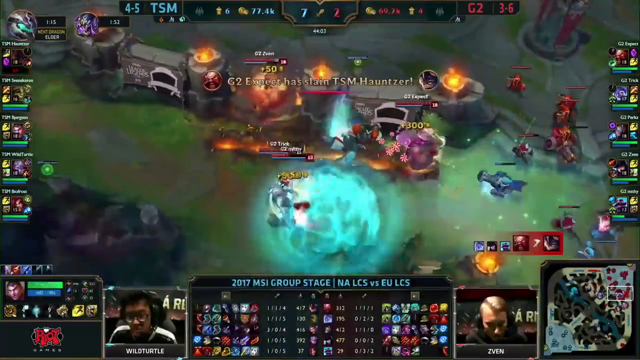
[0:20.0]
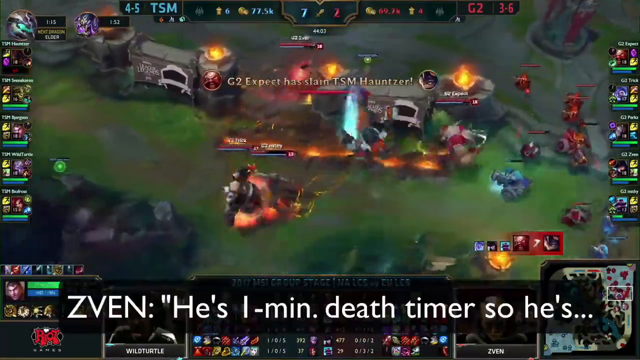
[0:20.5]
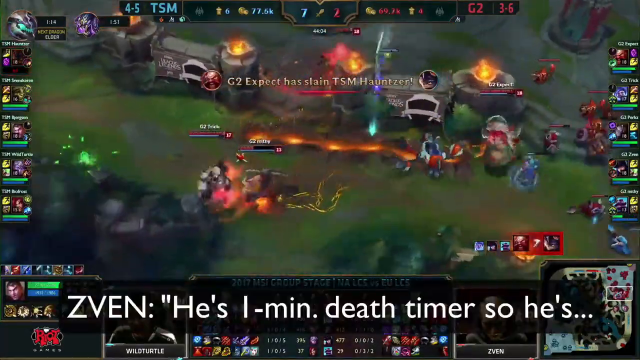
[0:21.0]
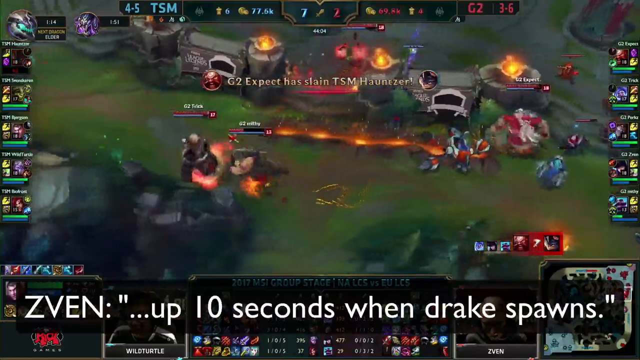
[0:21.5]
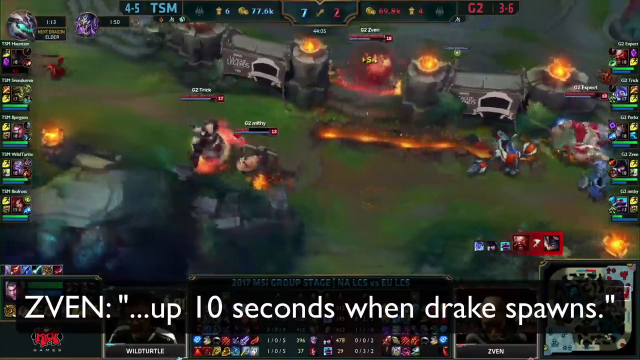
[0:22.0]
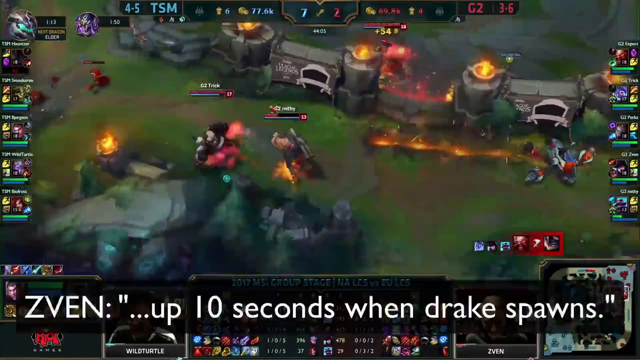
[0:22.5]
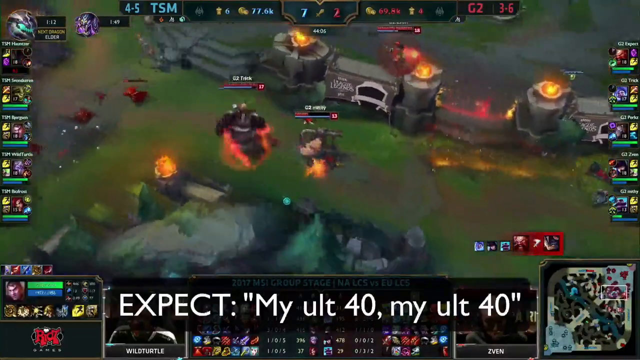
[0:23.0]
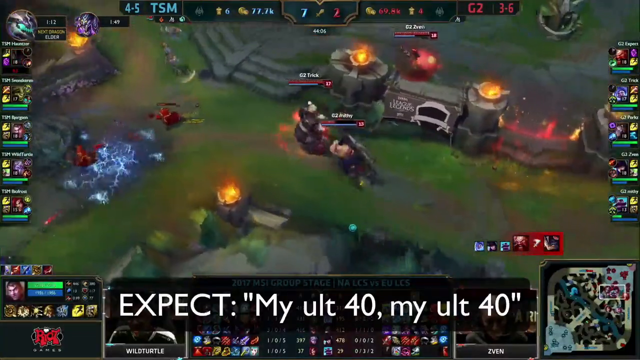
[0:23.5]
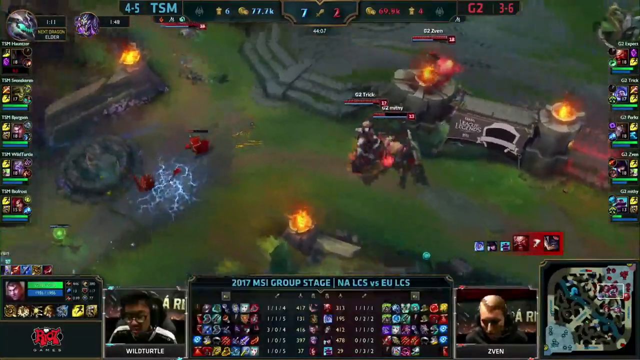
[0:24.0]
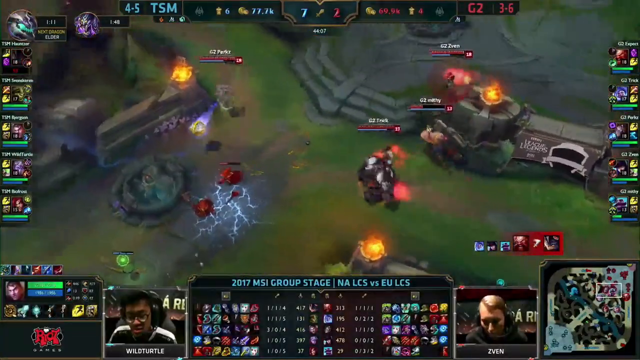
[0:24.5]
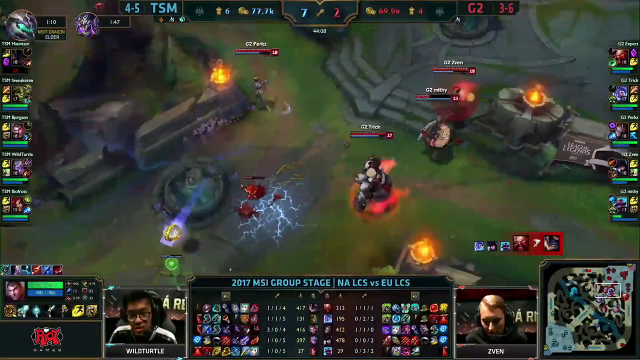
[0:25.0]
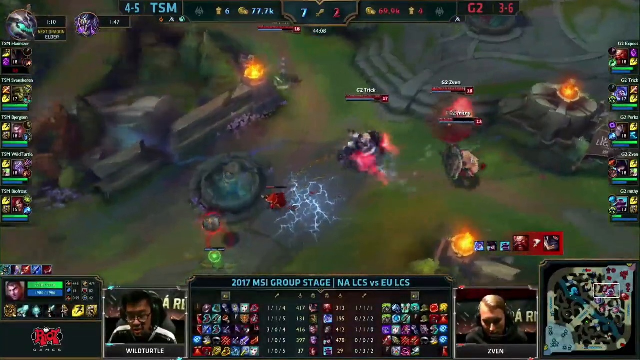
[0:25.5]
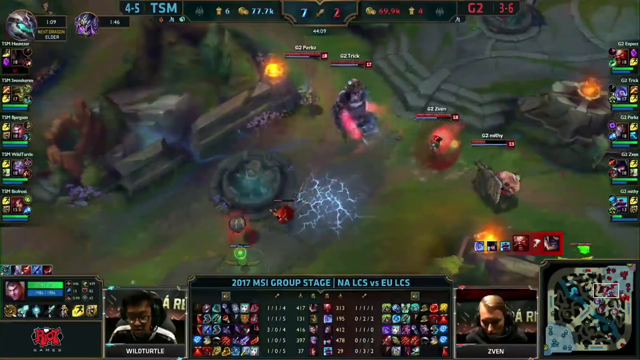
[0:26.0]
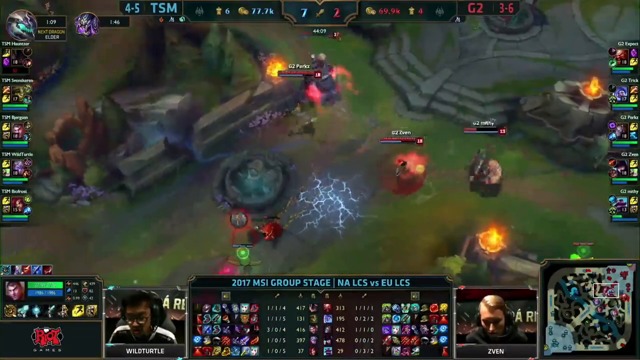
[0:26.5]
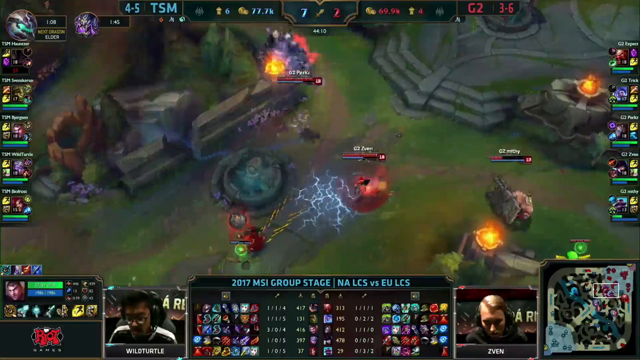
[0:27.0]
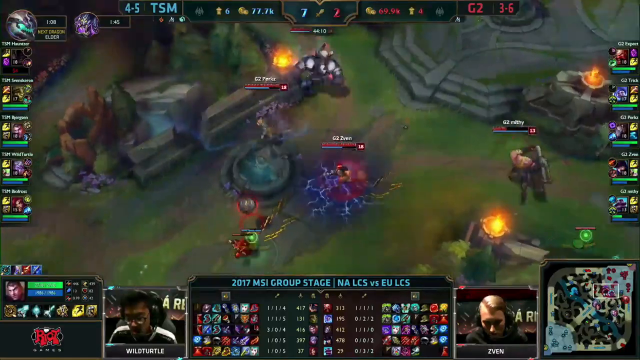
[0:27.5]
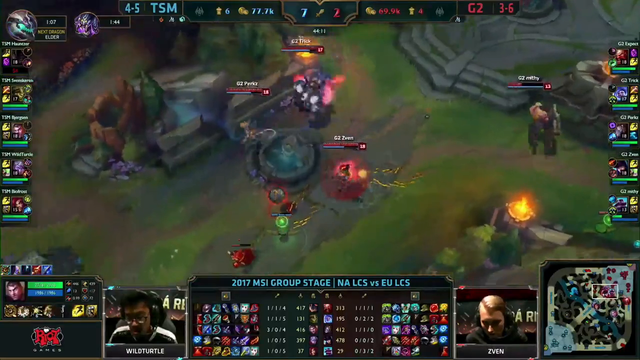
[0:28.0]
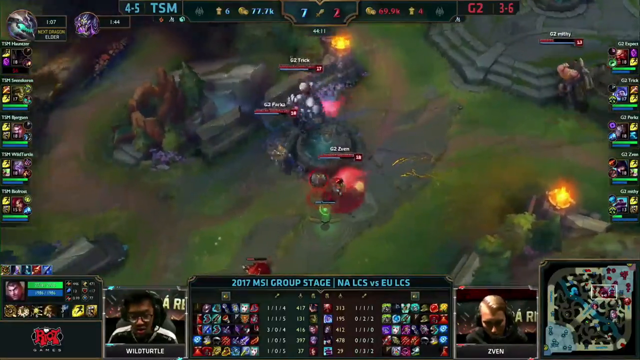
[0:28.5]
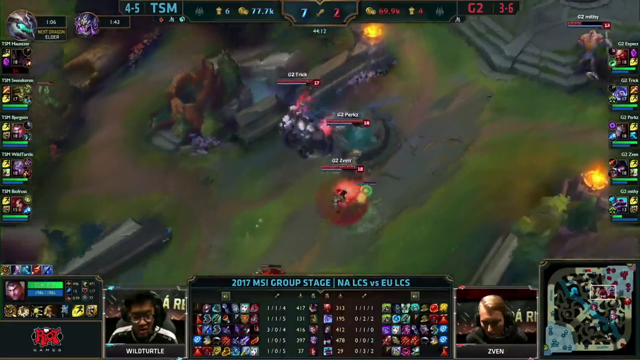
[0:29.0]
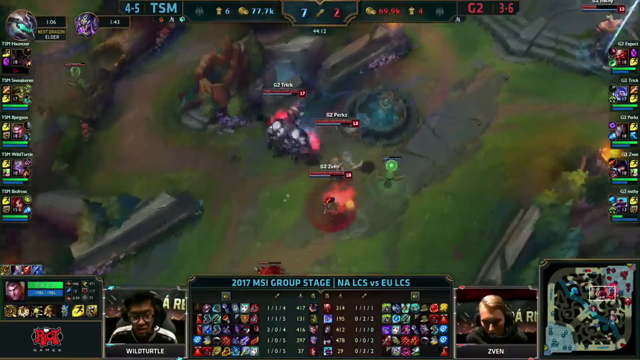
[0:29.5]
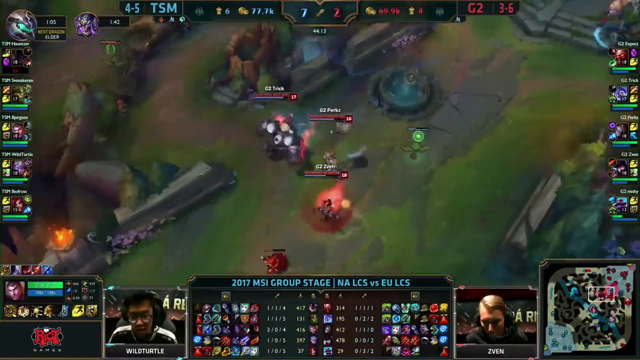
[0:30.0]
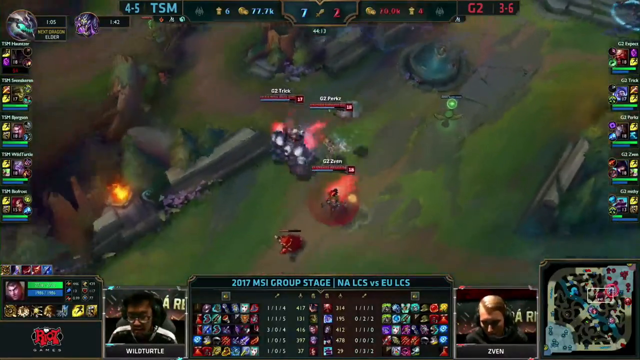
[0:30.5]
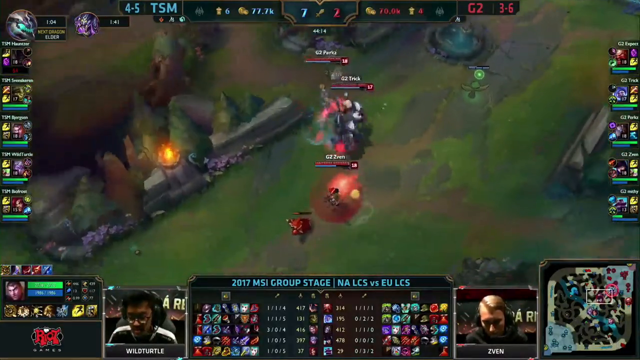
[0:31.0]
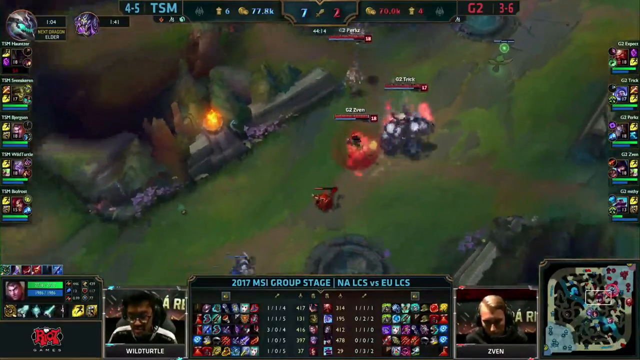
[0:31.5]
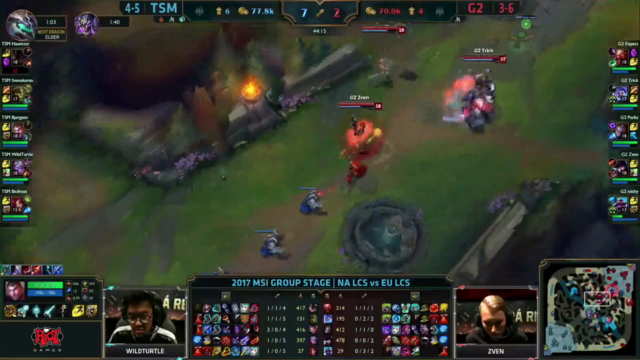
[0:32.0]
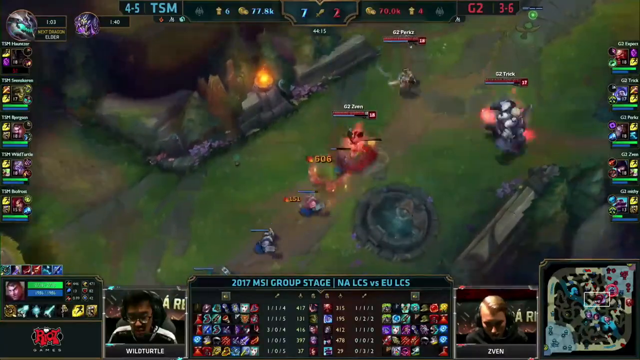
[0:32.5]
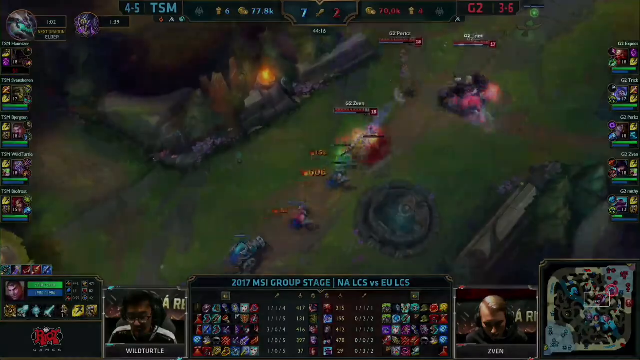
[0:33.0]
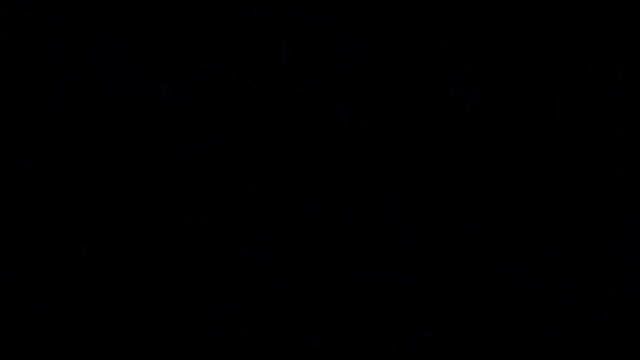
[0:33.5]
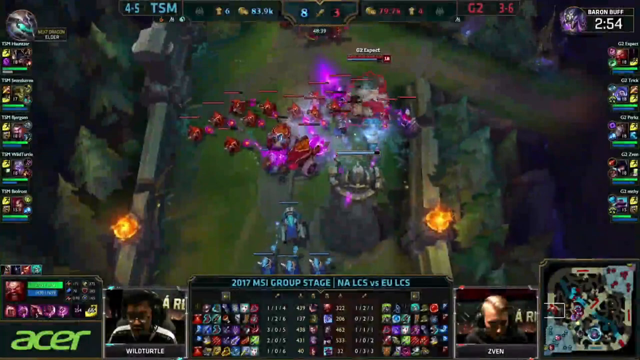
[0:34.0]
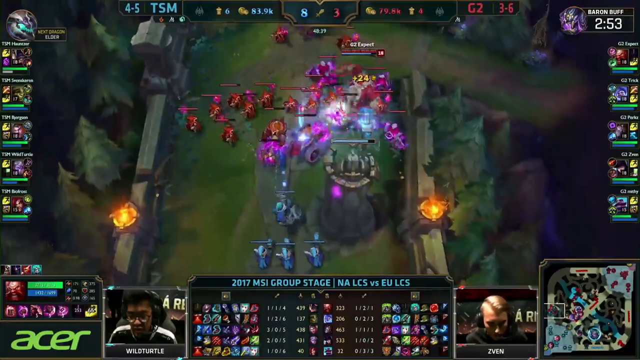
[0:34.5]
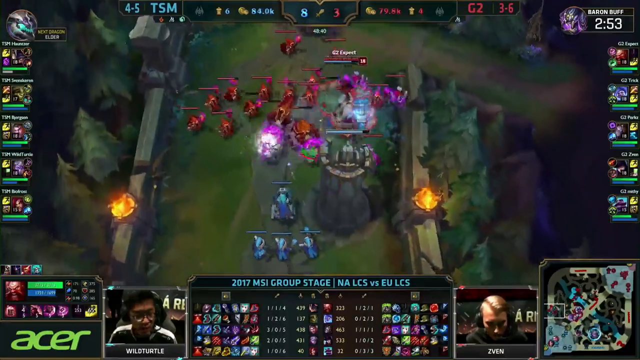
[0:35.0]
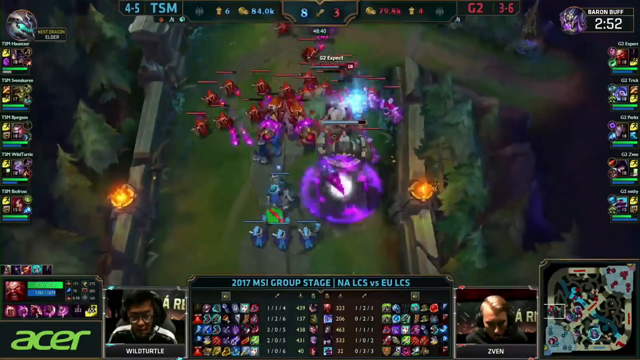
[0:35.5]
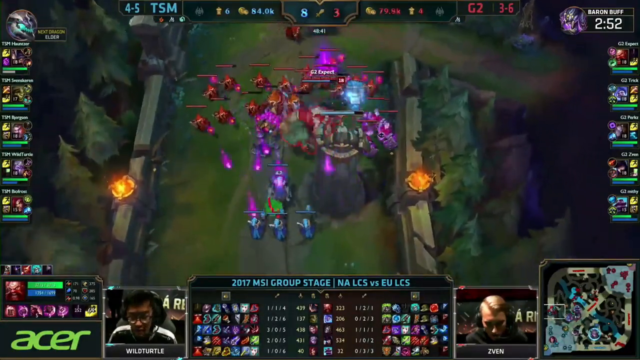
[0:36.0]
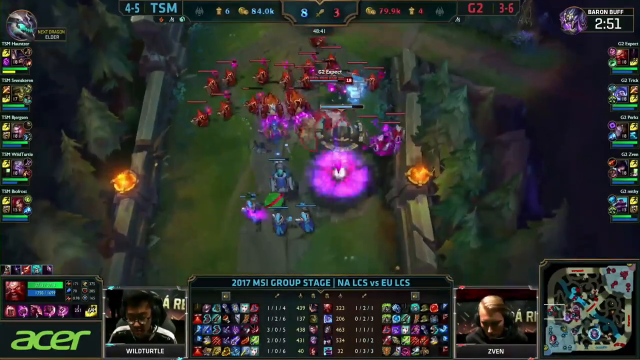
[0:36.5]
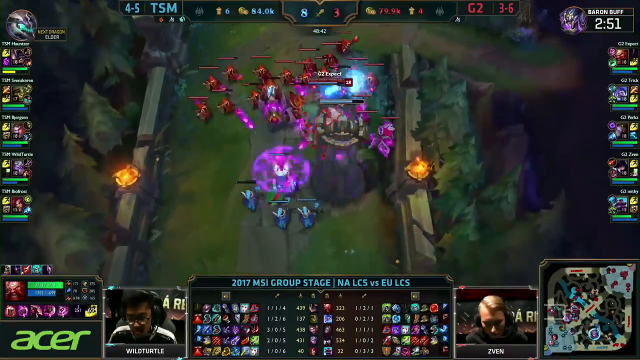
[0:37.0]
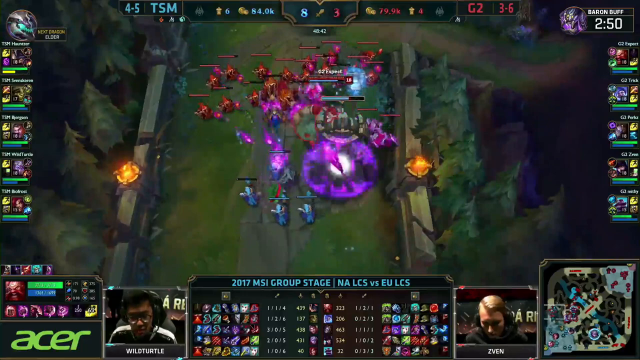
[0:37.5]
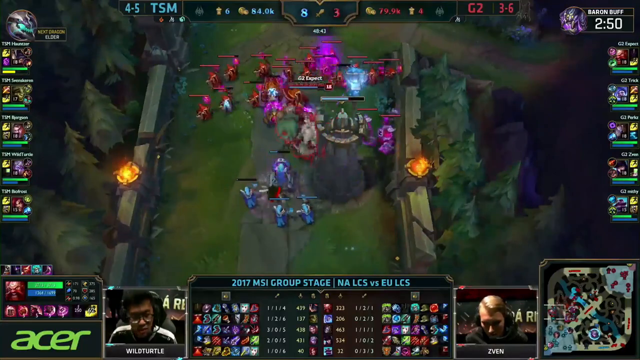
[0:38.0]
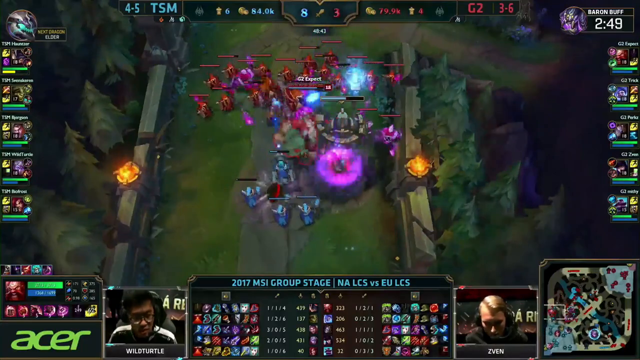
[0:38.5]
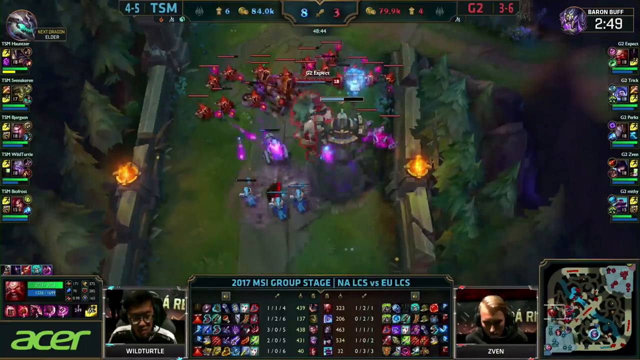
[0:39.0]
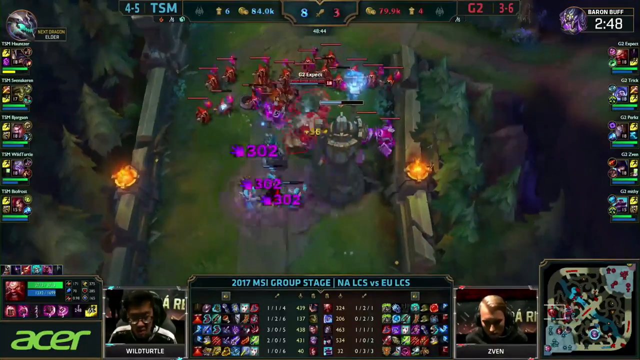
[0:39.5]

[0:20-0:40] More League of Legends gameplay is shown, cutting between players. A large, super-tall purplish character runs around and is damaged by another player. The camera pans to the southeast, then cuts to another screen. White subtitle text on a black background appears at the bottom, starting with "expect," apparently a user's name, followed by "rumble rumble rumble rumble." Further subtitles follow: trick and perks say "go mid go mid now"; Sven says "he's a one minute death timer so he's up 10 seconds when drake spawns"; expect says "my alt 40 my alt 40." Throughout this, the characters, seen from overhead, shoot lots of fire and what appears to be ice magic at each other. The camera pans to the upper left, toward the northwest, and then cuts to a chaotic battle on a bridge, where many red and blue creepers clash with larger characters.